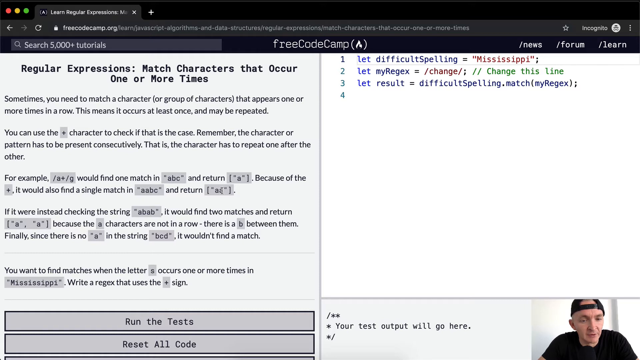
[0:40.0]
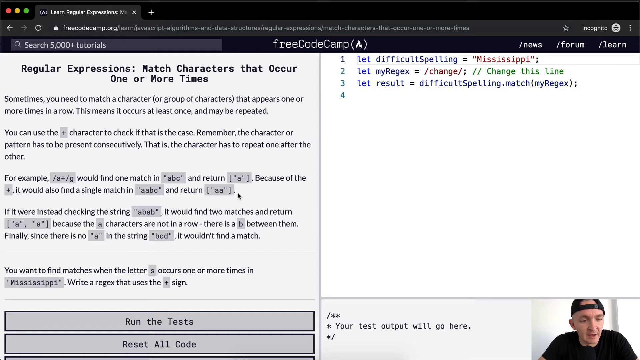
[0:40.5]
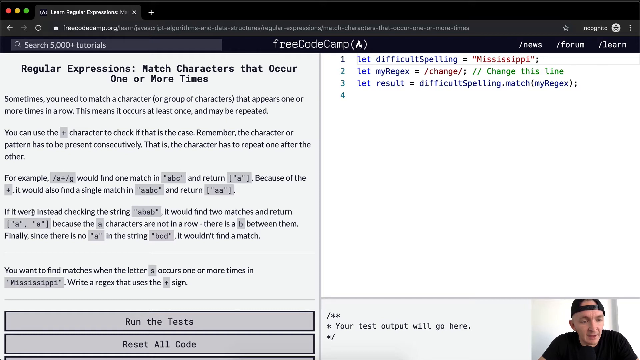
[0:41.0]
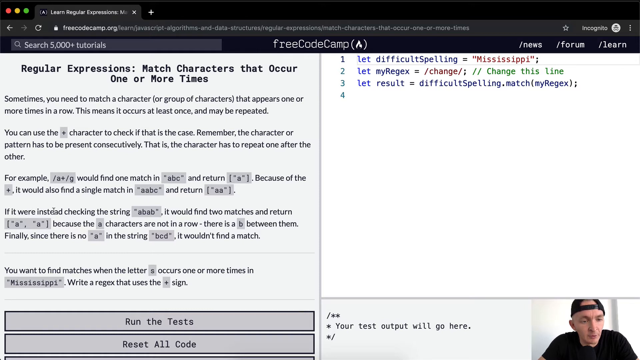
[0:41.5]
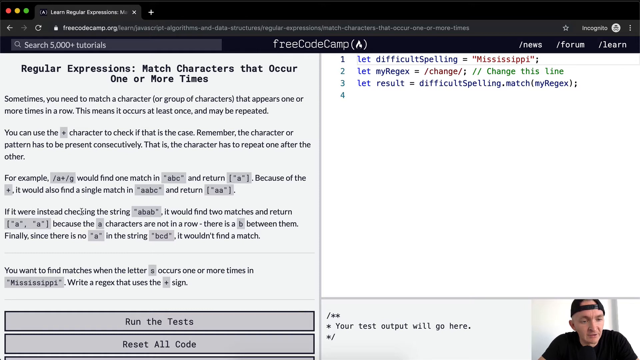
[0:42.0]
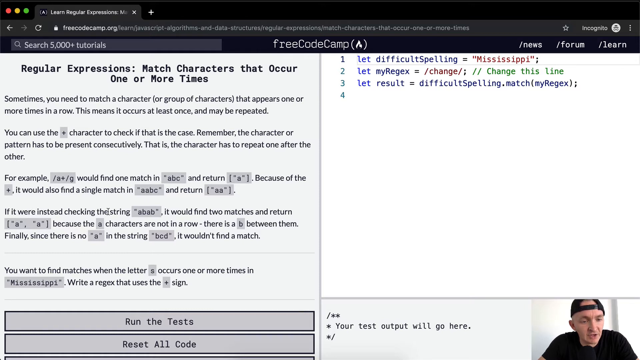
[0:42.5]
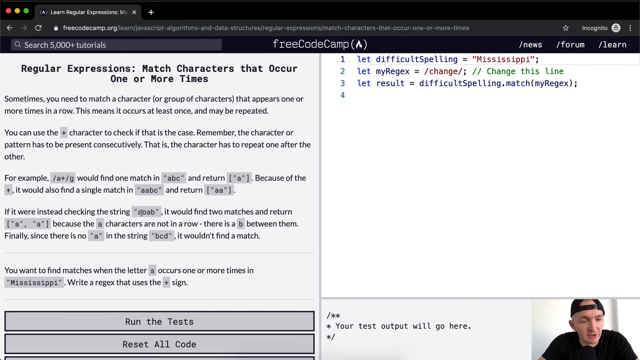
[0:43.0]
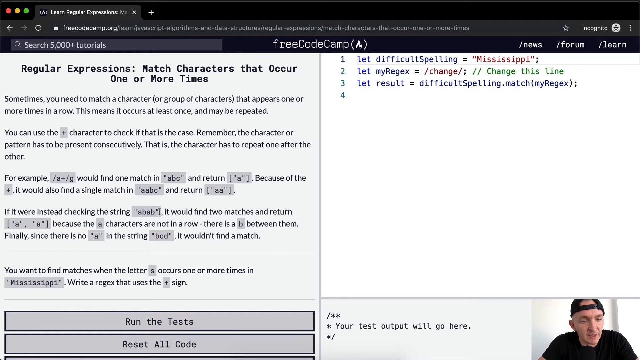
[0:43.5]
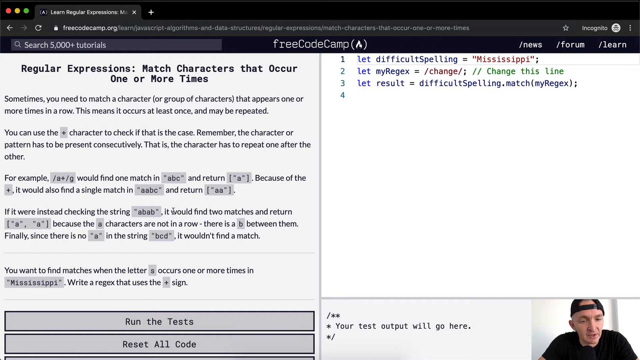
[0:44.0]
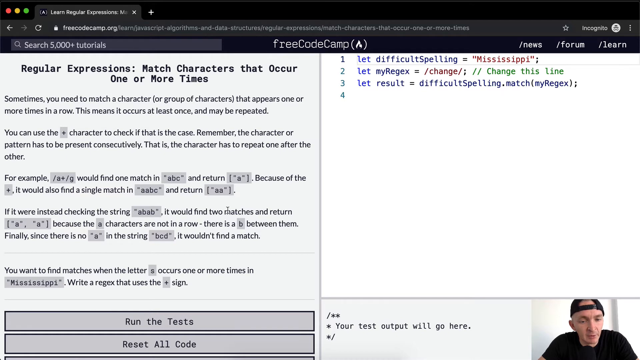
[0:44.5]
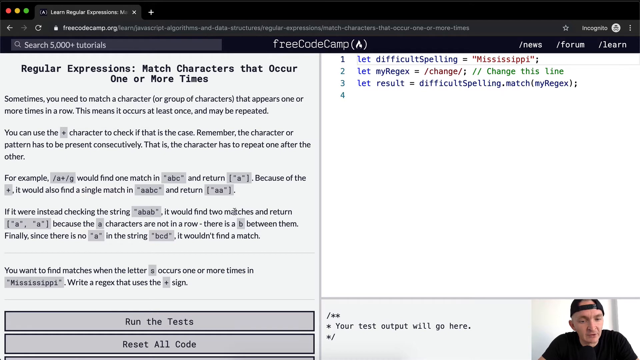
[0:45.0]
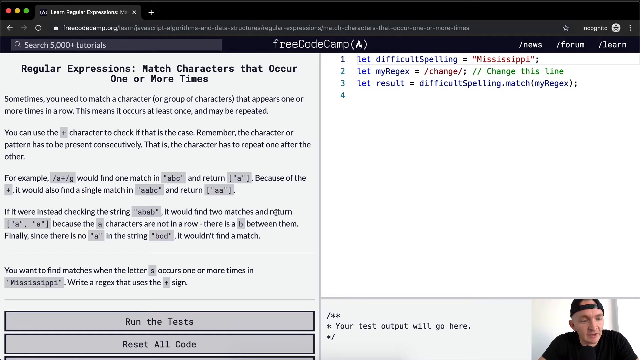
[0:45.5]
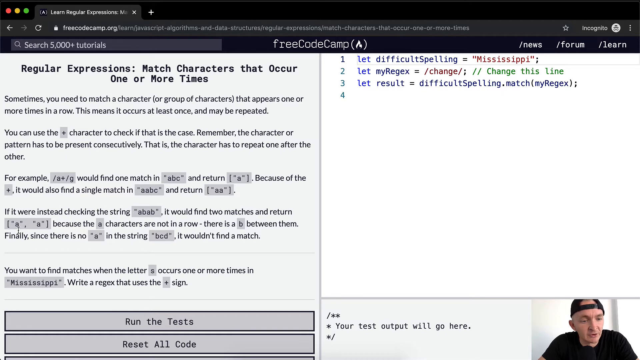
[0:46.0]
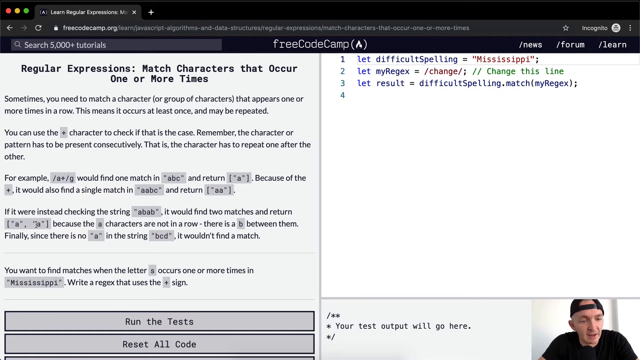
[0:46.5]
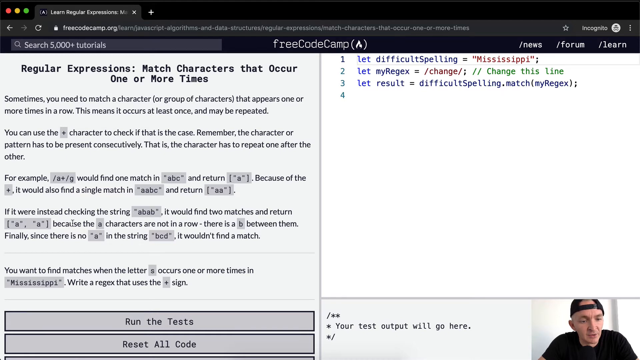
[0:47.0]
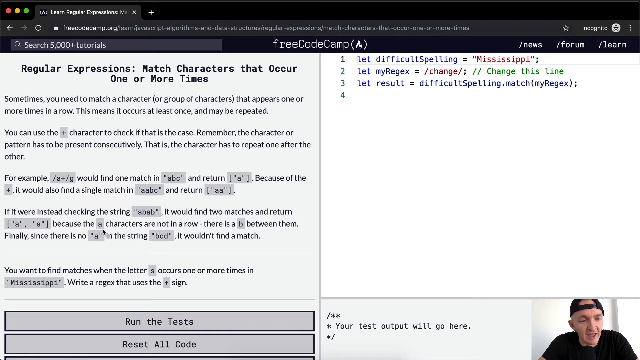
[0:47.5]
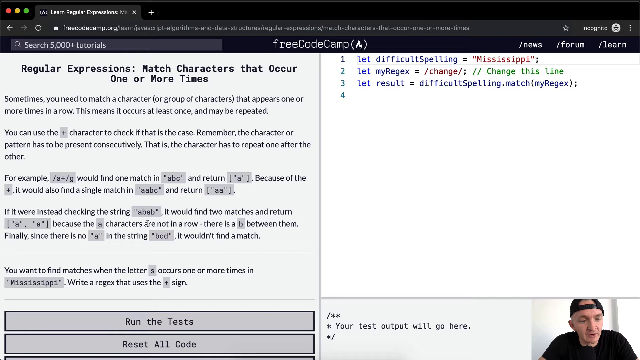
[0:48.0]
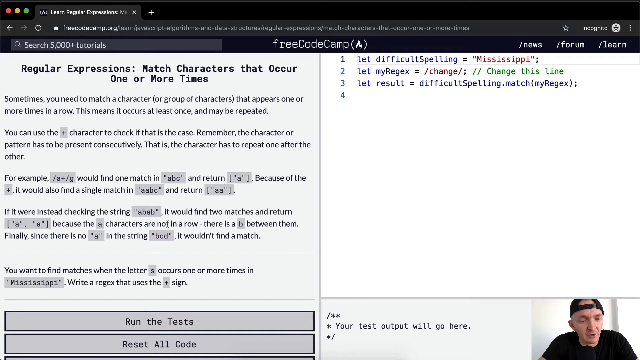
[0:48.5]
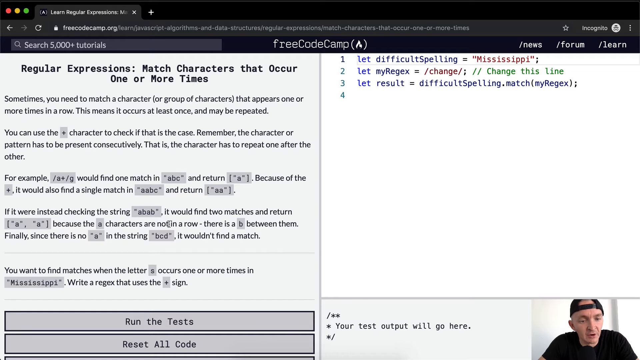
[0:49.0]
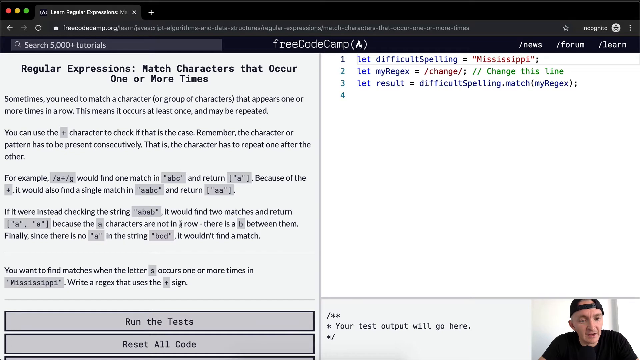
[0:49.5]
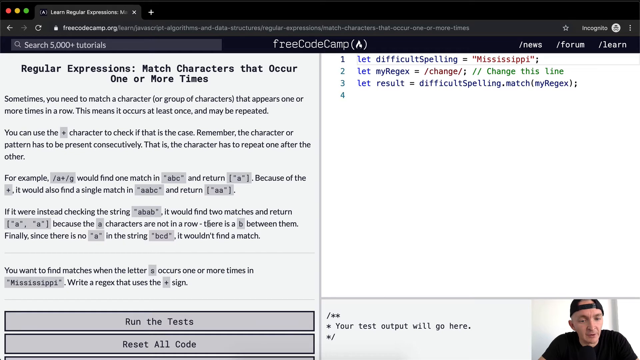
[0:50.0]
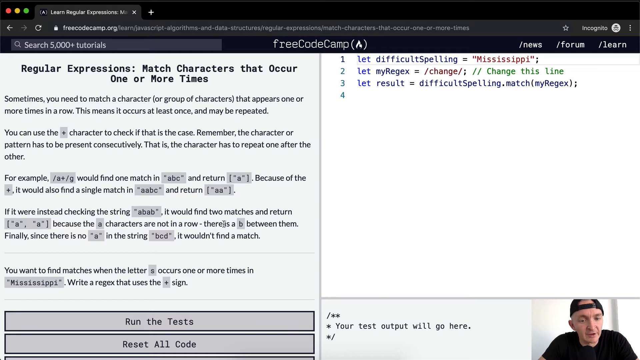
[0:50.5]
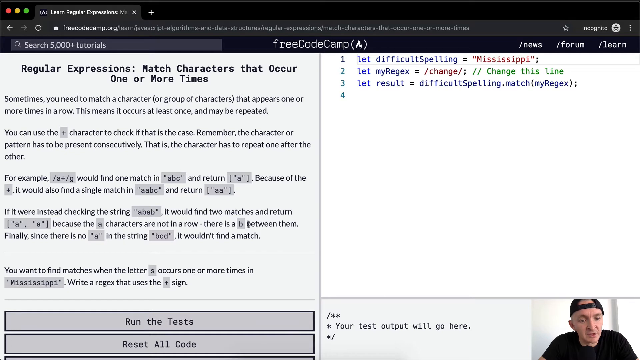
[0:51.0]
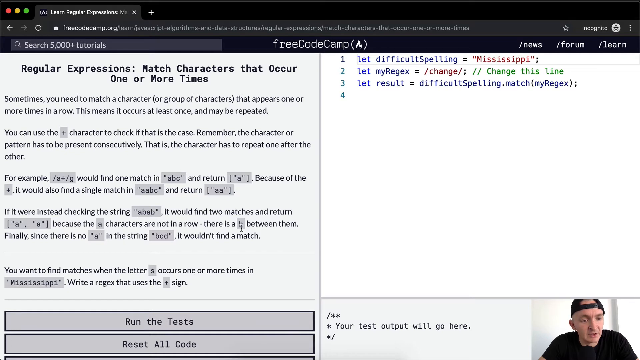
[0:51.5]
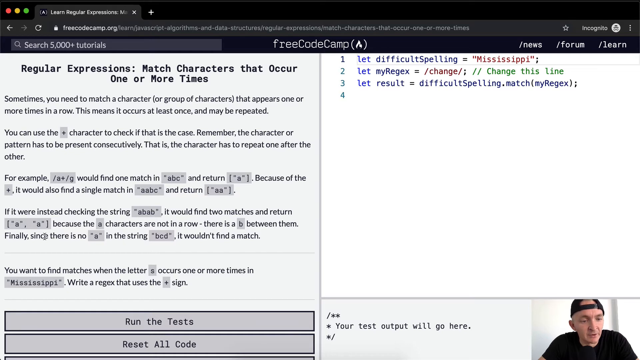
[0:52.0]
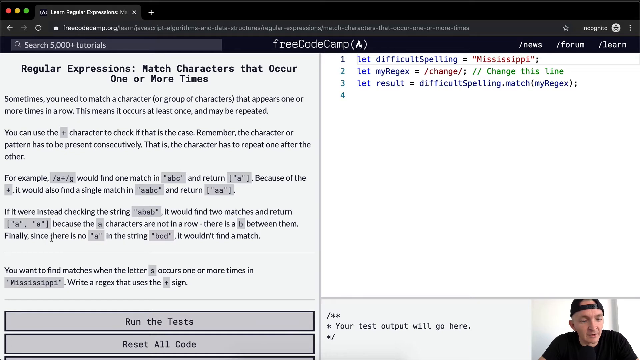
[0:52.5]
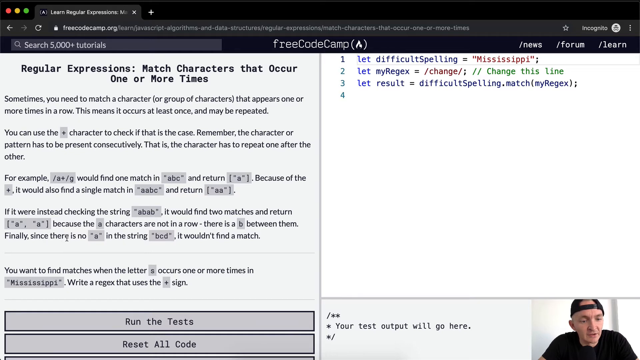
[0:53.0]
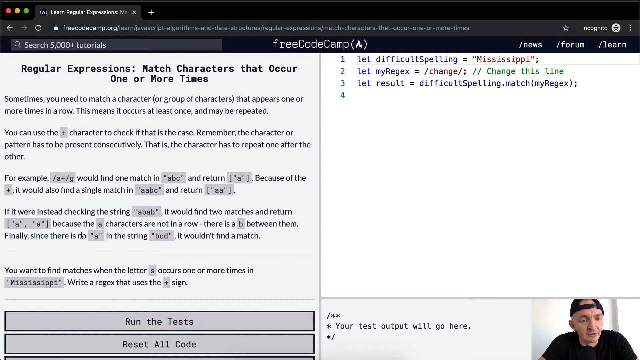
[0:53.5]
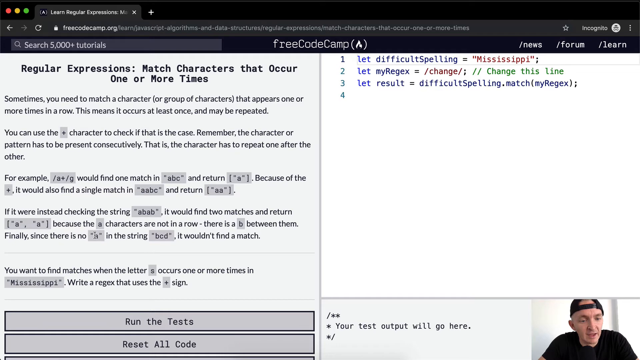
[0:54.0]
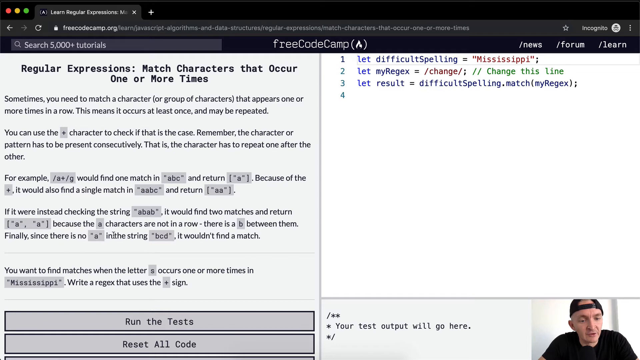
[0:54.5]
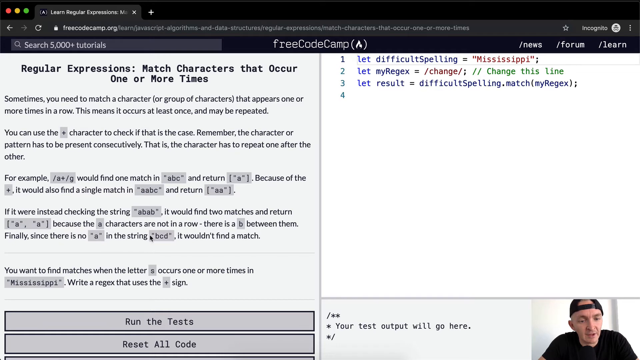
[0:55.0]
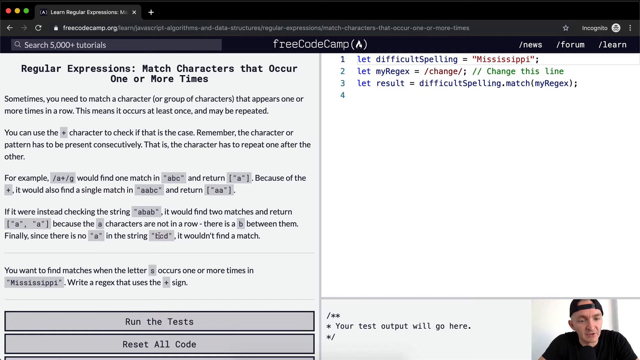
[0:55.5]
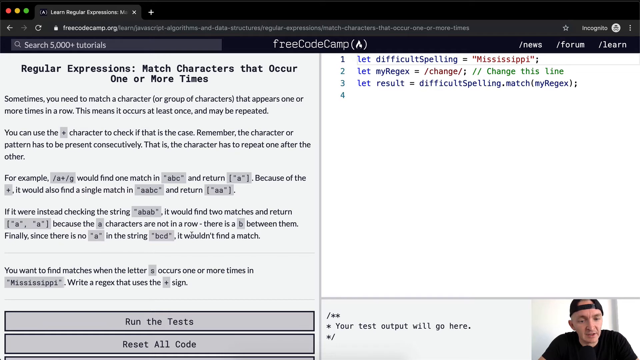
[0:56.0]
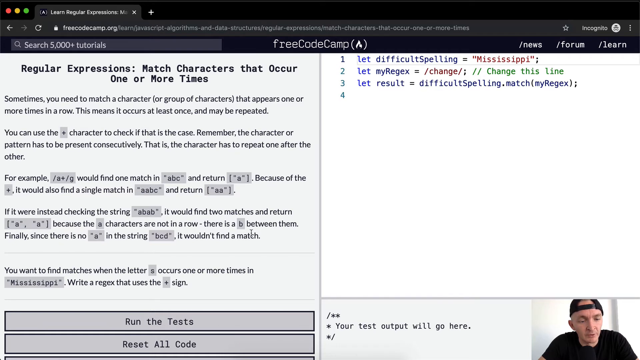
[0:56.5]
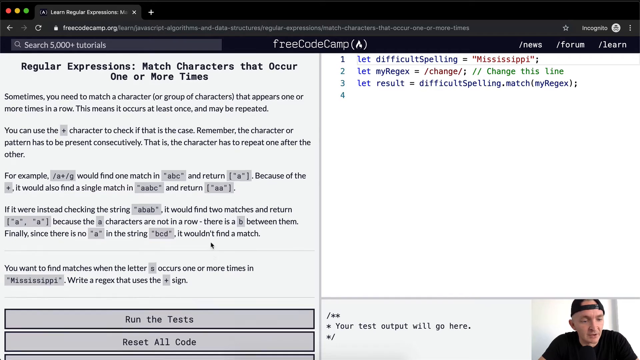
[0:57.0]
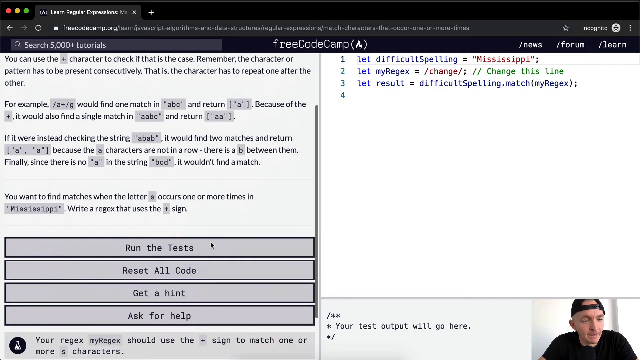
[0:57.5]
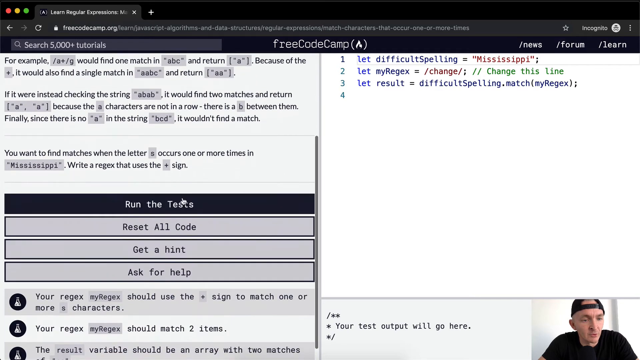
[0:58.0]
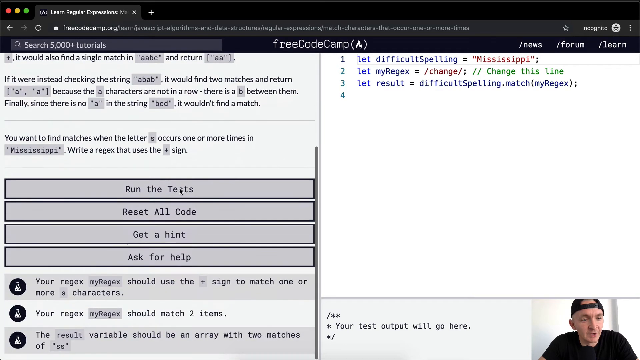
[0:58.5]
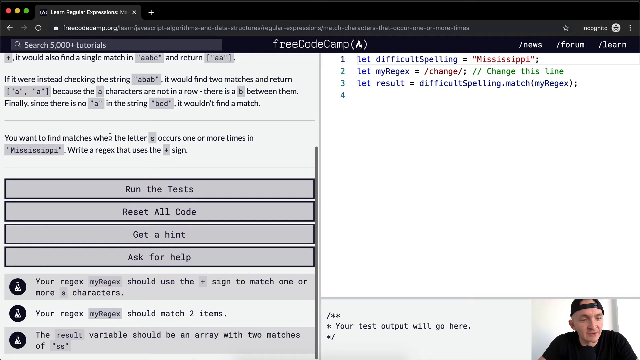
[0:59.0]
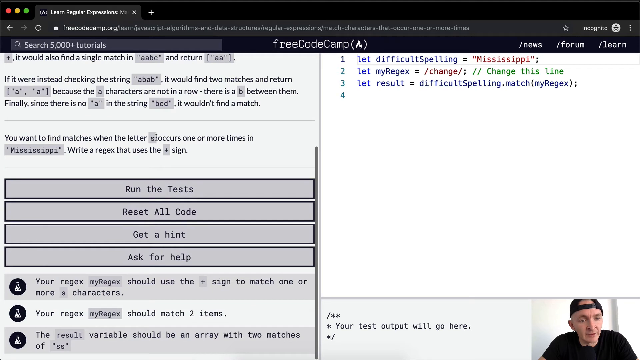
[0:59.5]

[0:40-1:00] A tab is open to a screen that says "free code camp" at the top, with a search bar that says "search 5000 plus tutorials". The screen is split down the center. The left side says "regular expressions, match characters that occur one or more times" and has instructions, with a tab at the bottom that says "run the test" and another that says "reset all code". On the right side is a work window with lines numbered one through four, and beside them are strings of code the author has written so far. In the bottom right corner is a live feed of the author, who wears a black ball cap and a black t-shirt. He moves his mouse slowly, the cursor following one word at a time as he talks, and then moves down to the "run the test" and "reset all code" tabs.